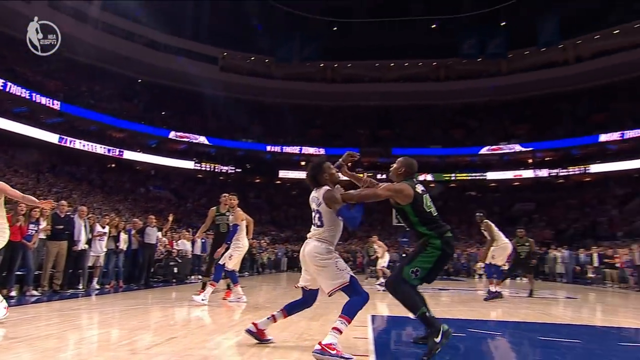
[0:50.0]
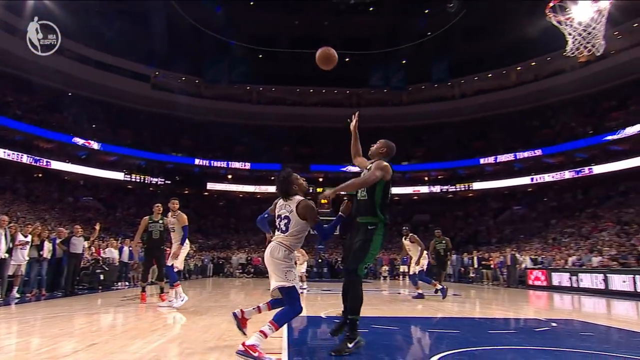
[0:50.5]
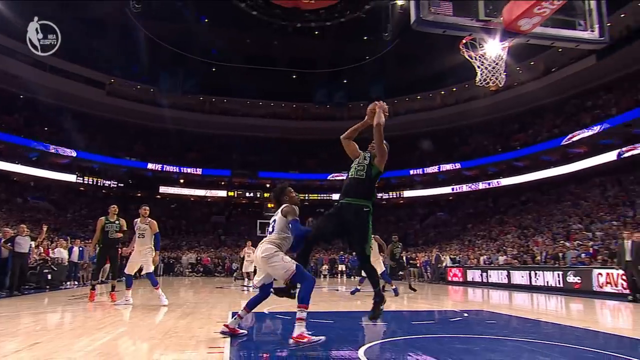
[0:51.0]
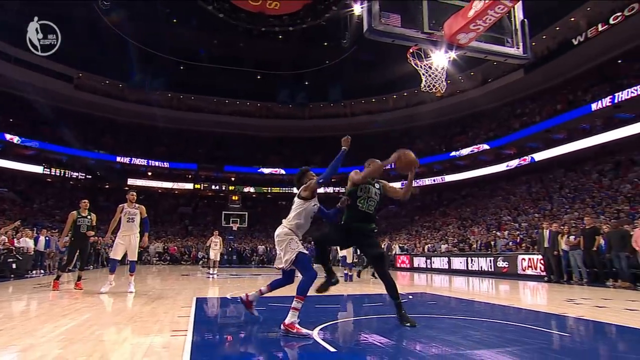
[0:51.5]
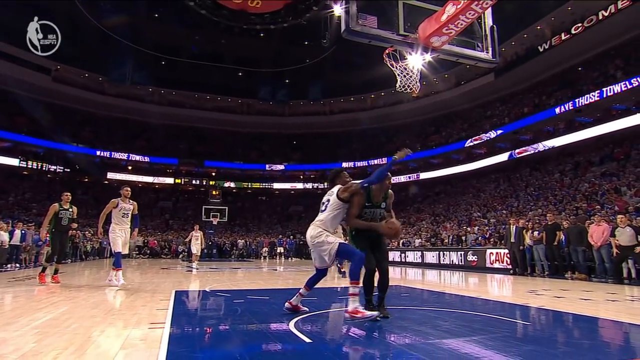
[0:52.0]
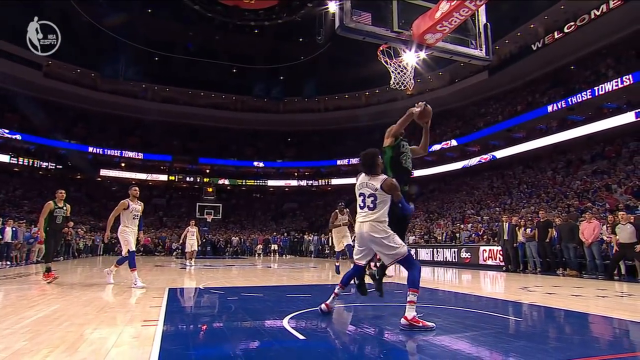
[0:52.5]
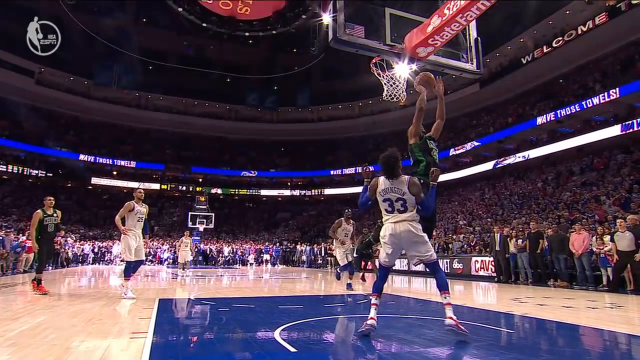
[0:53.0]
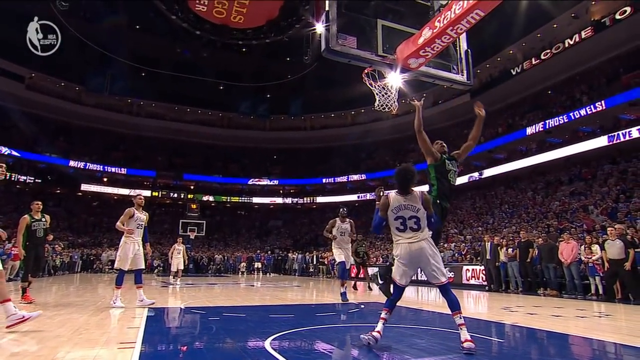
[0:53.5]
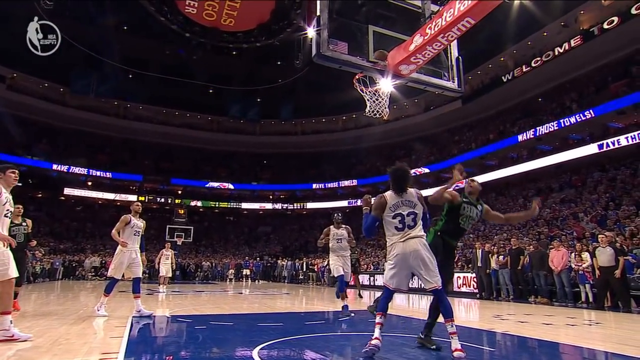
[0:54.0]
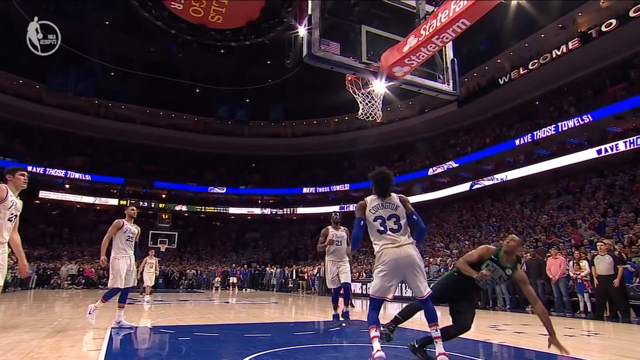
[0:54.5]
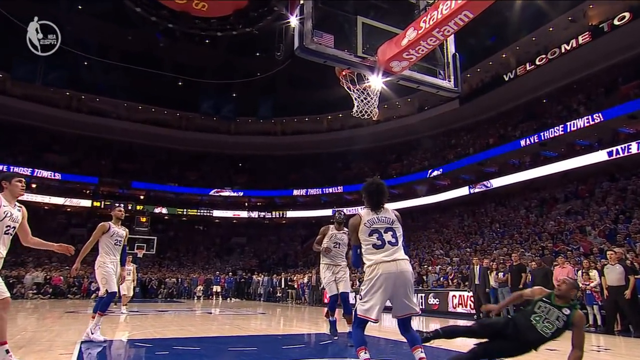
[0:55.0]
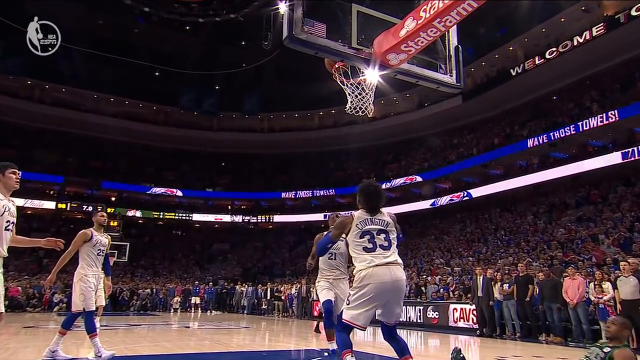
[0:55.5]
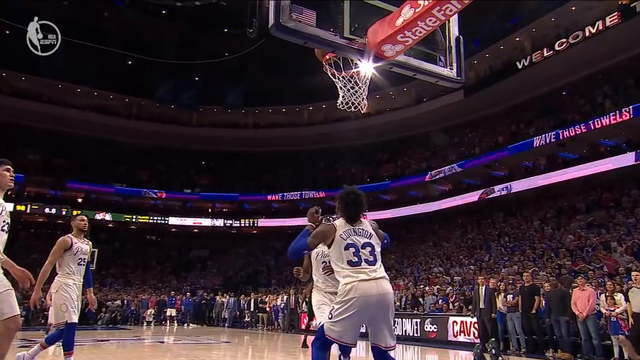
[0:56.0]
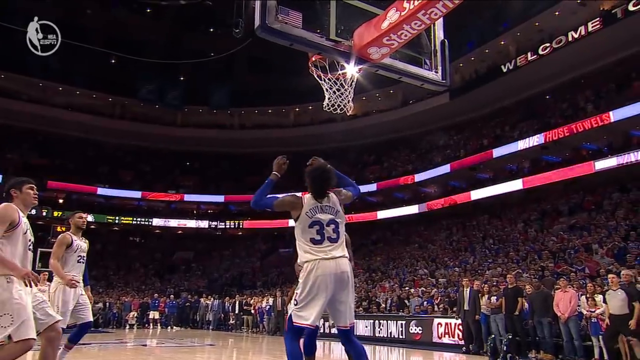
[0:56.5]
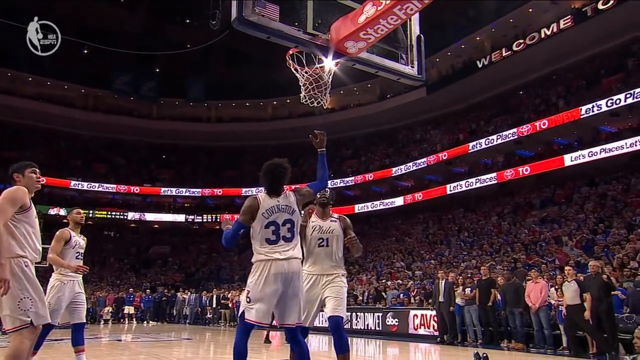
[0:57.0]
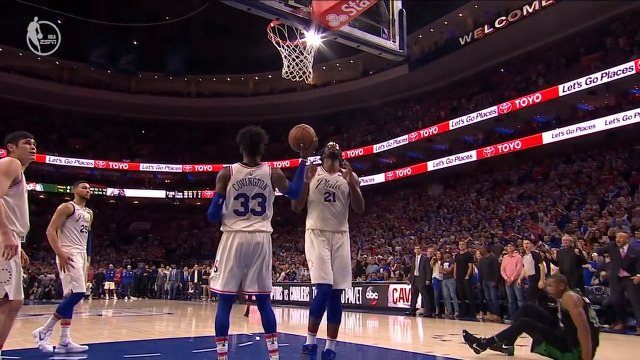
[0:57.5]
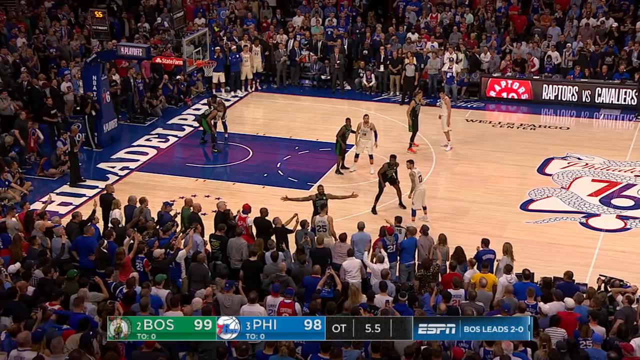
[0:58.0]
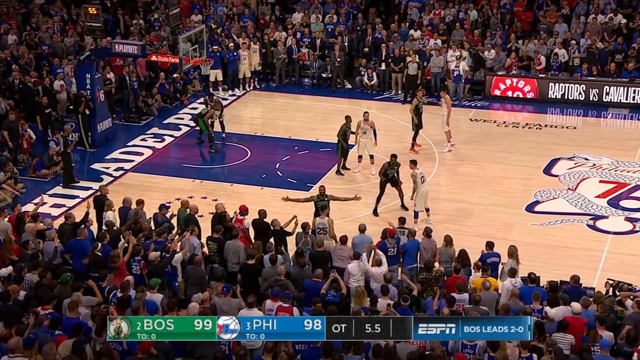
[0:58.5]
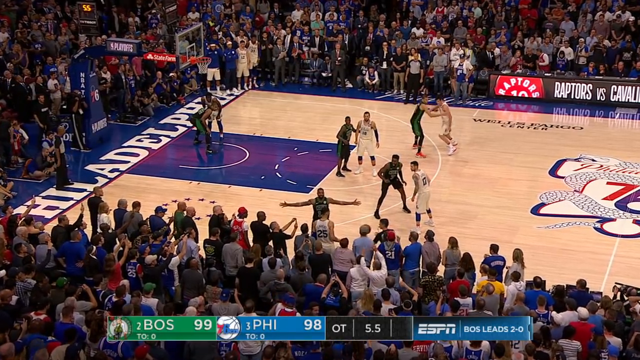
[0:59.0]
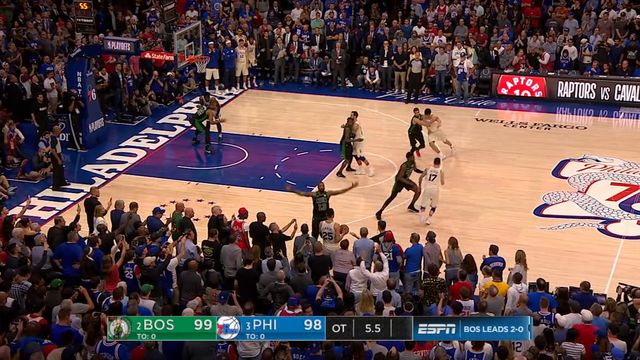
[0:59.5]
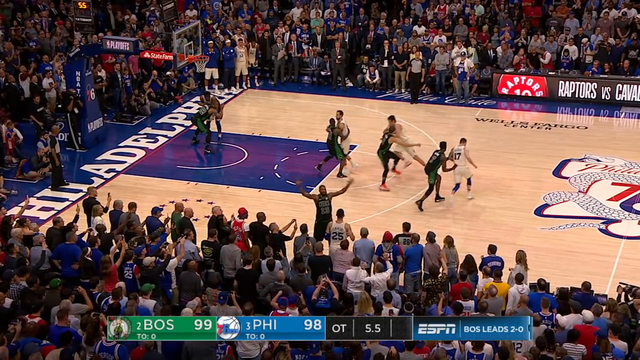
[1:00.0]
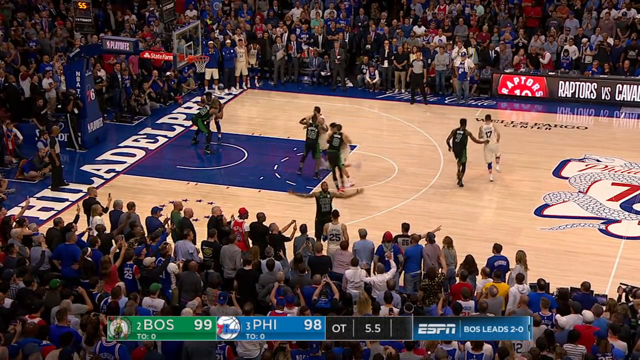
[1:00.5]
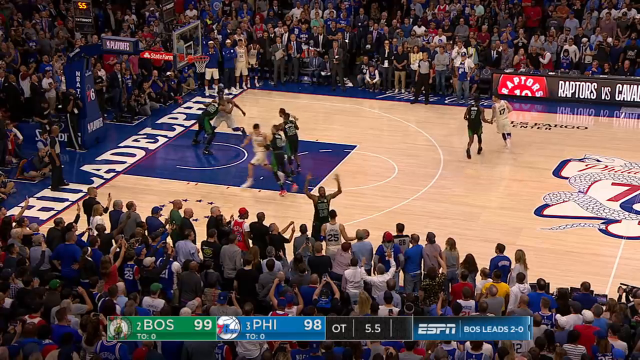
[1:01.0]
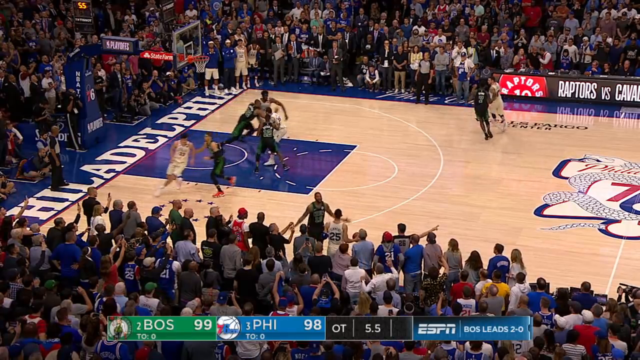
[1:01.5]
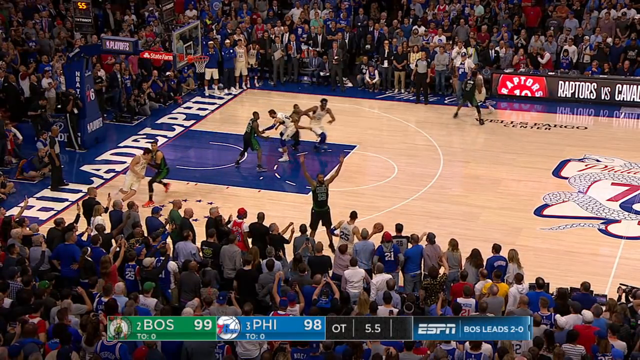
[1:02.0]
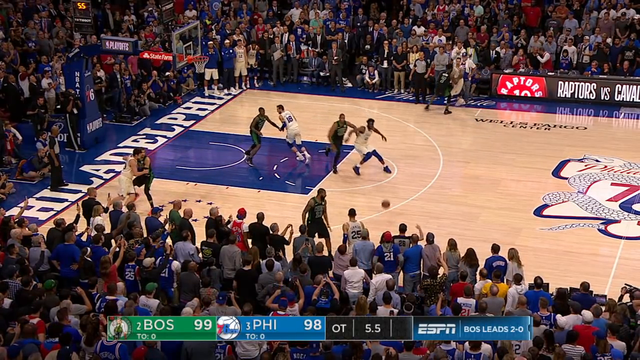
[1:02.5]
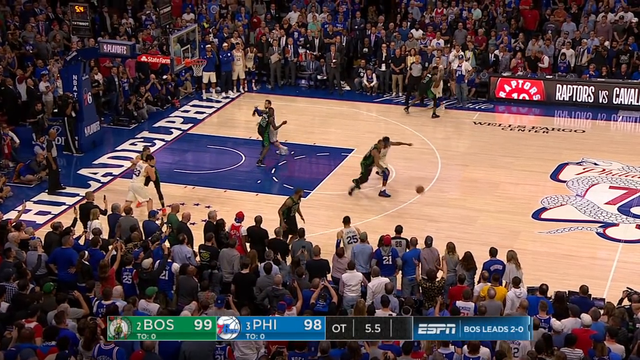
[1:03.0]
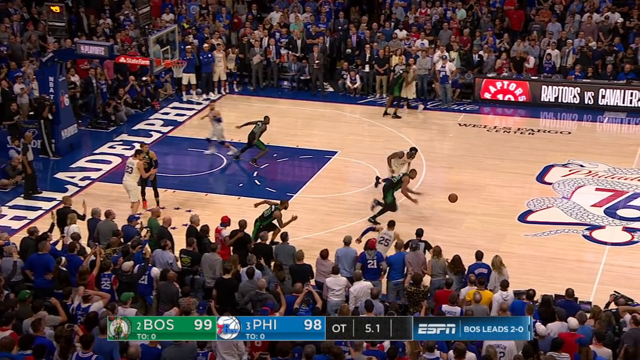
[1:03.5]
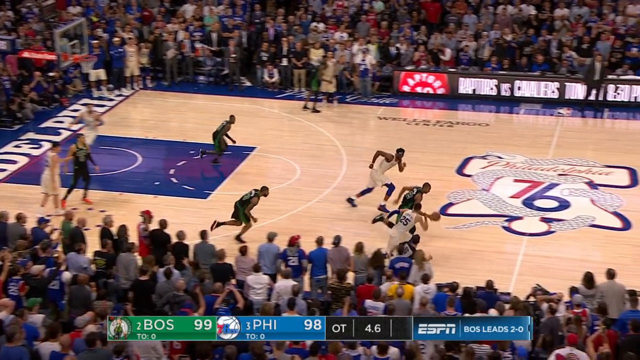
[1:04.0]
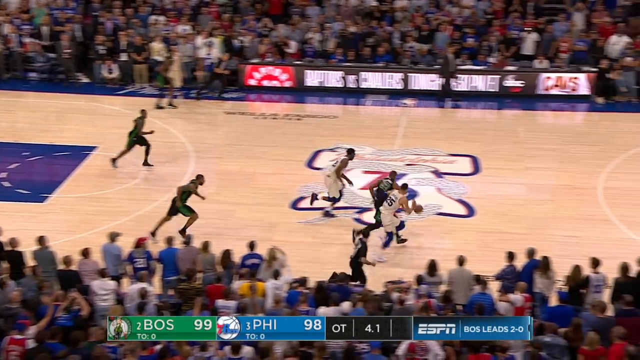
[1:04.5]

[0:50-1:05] The shot is shown from a right perspective as he takes the ball. The player to the left of him wears a white jersey with blue arm and leg guards; he jumps to the right of the basket, throws the ball up, and shifts his arms to the right to make the basket, apparently the reason he fell. The replay is slowed down. Play then continues with the 76ers in possession. The player at the bottom hastily throws the ball with his right hand, the player at the top tries to get the ball, and a Celtics player runs in front of the intended receiver, steals the ball, and travels with it to the right side of the court.